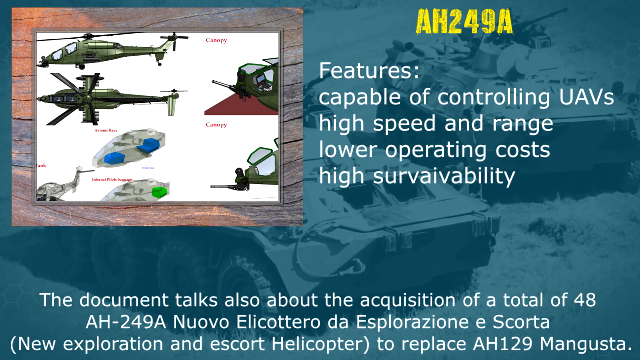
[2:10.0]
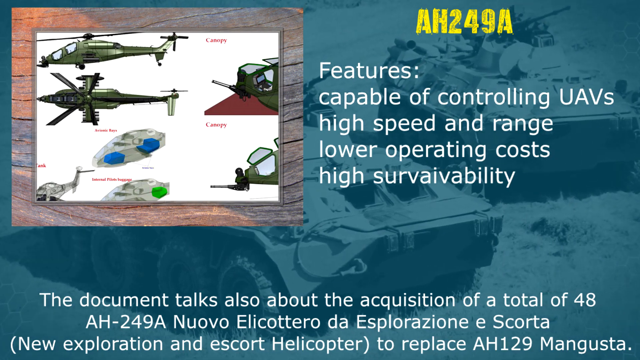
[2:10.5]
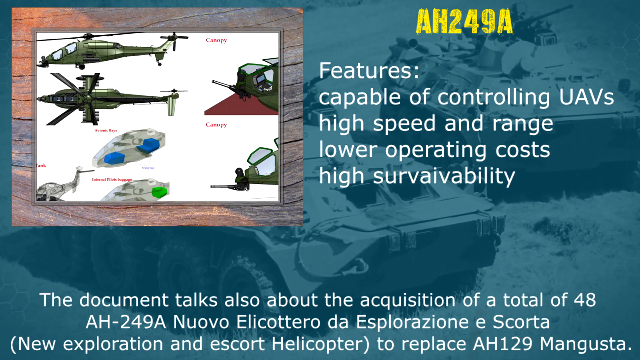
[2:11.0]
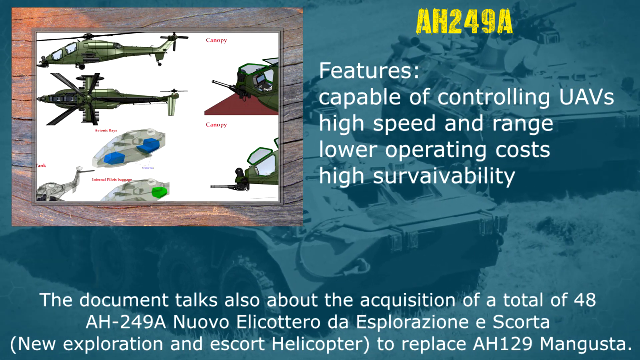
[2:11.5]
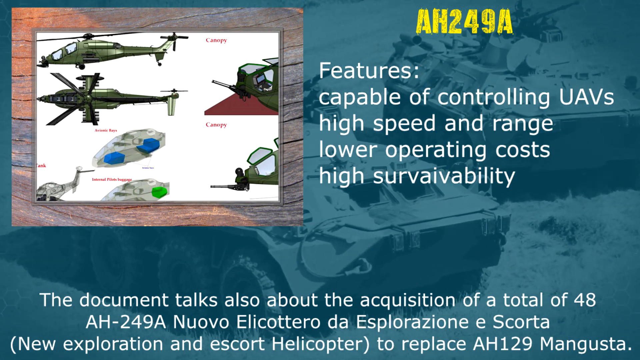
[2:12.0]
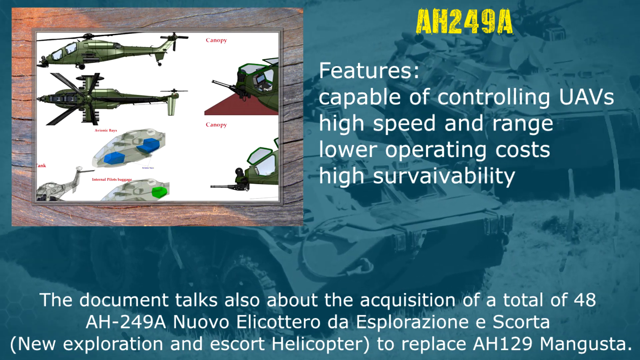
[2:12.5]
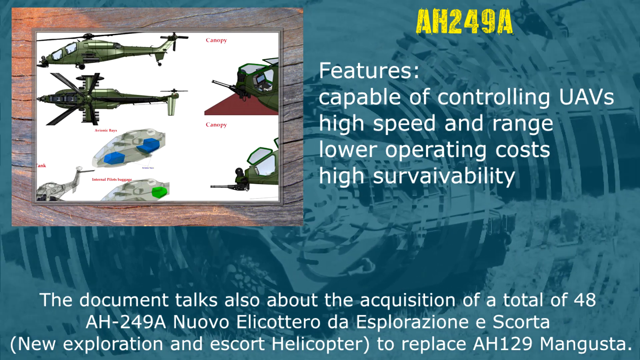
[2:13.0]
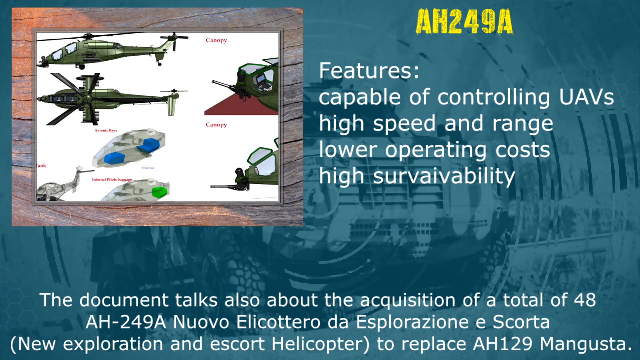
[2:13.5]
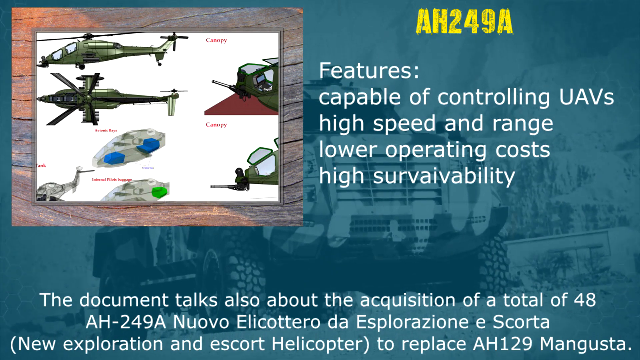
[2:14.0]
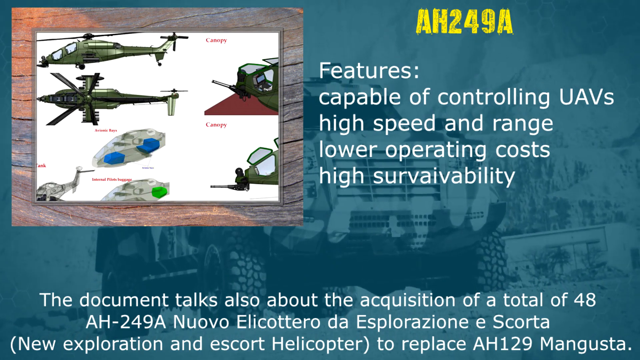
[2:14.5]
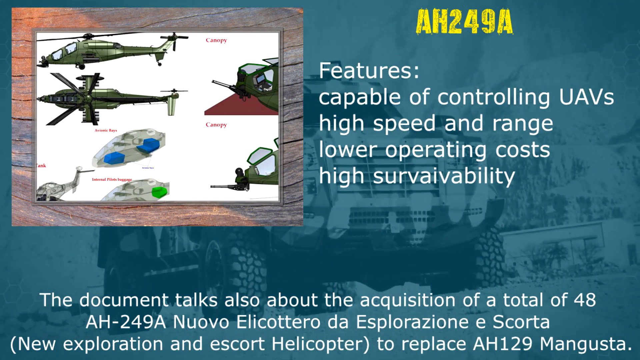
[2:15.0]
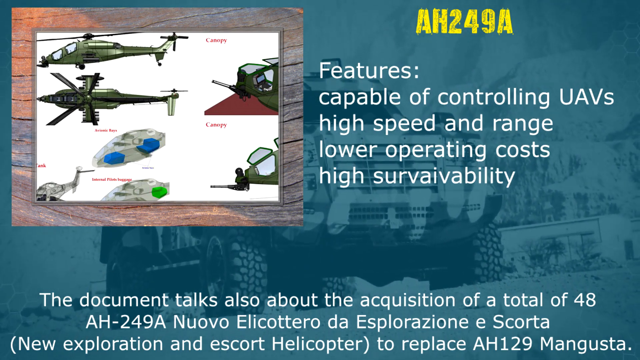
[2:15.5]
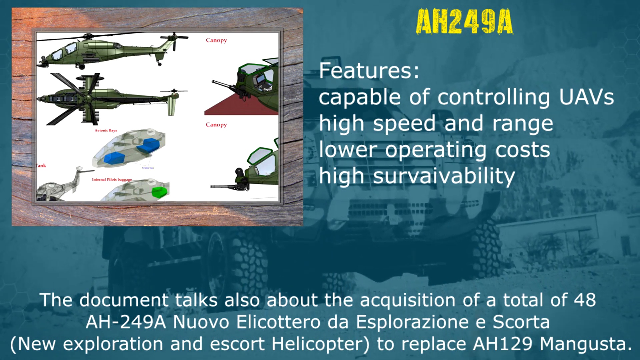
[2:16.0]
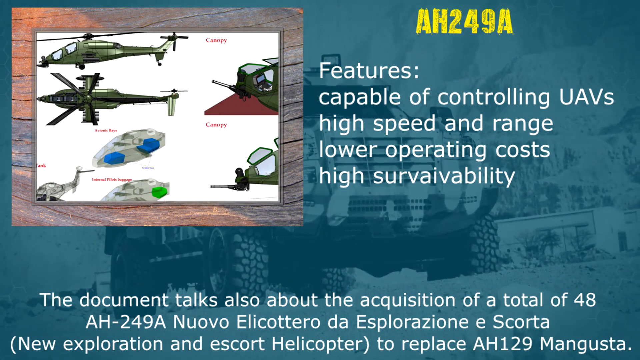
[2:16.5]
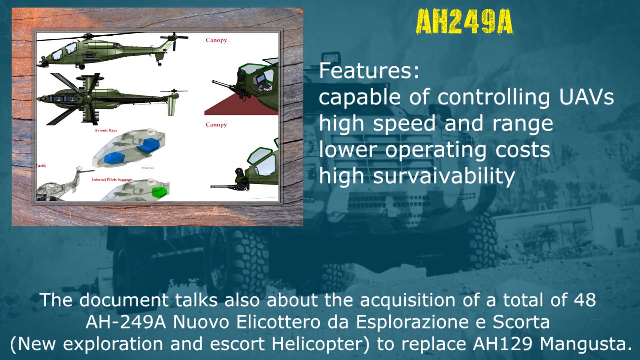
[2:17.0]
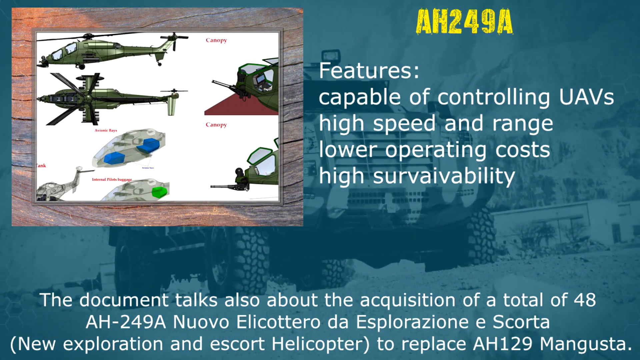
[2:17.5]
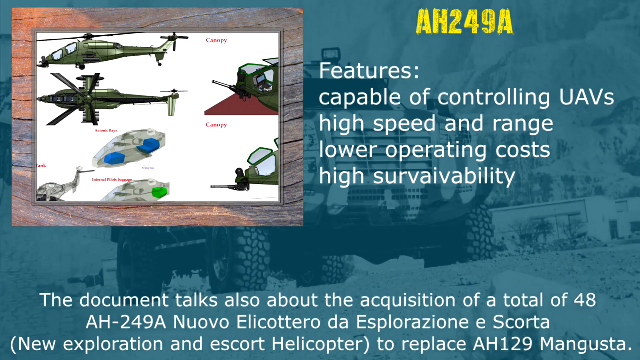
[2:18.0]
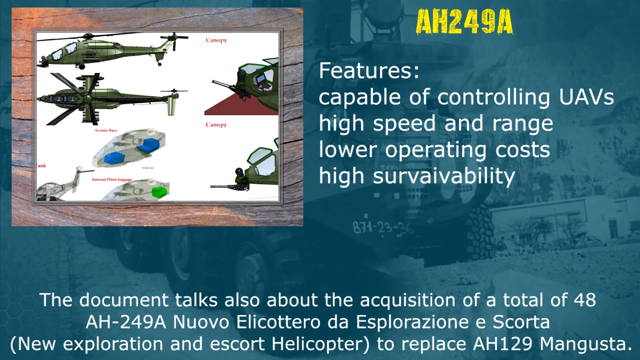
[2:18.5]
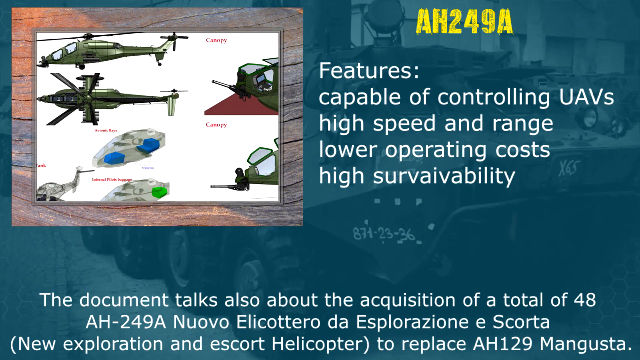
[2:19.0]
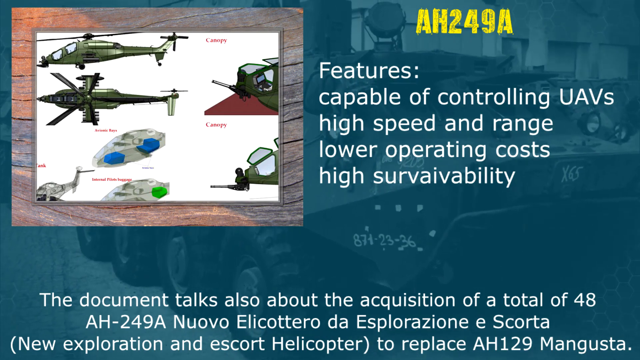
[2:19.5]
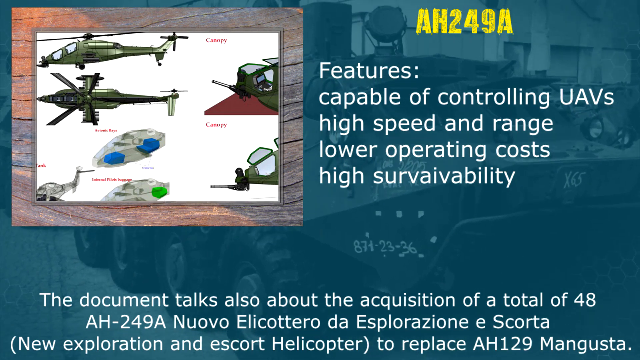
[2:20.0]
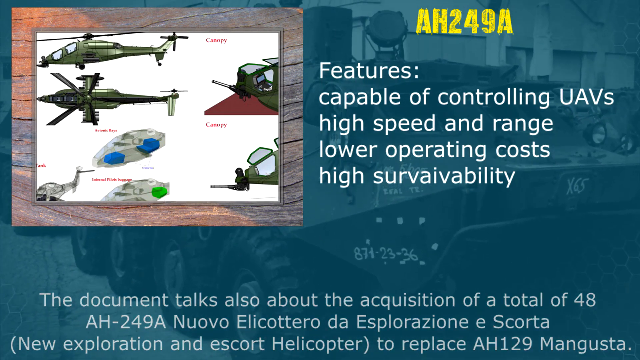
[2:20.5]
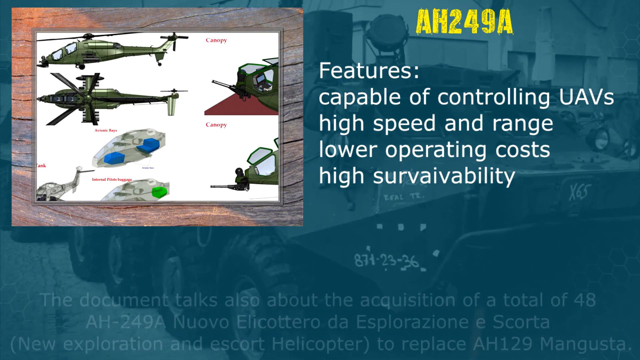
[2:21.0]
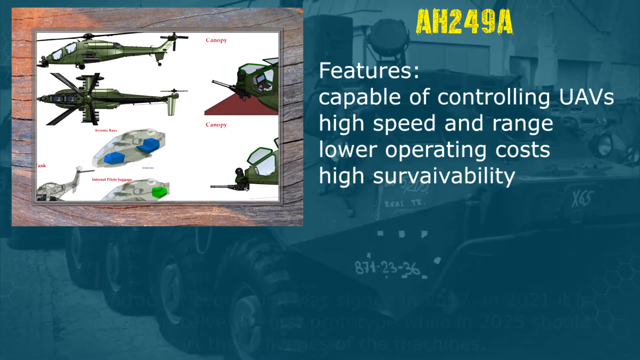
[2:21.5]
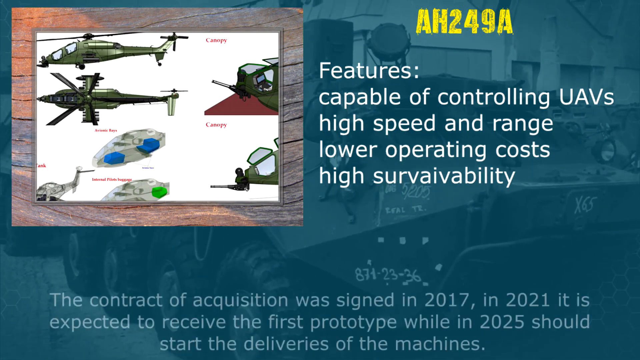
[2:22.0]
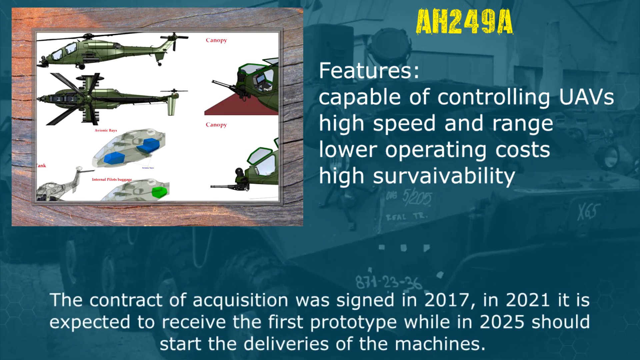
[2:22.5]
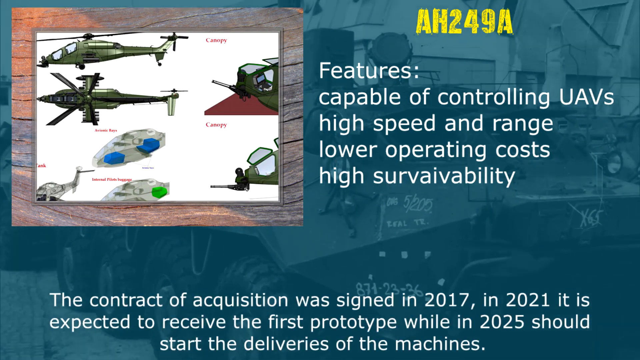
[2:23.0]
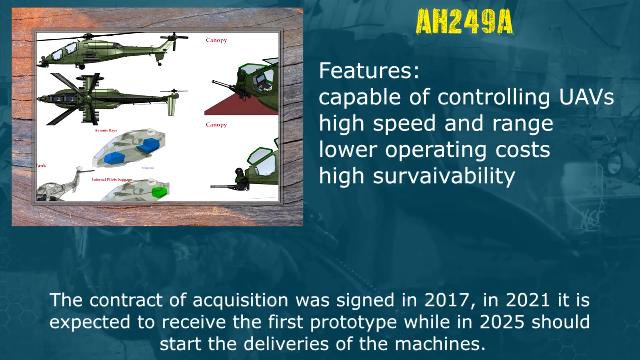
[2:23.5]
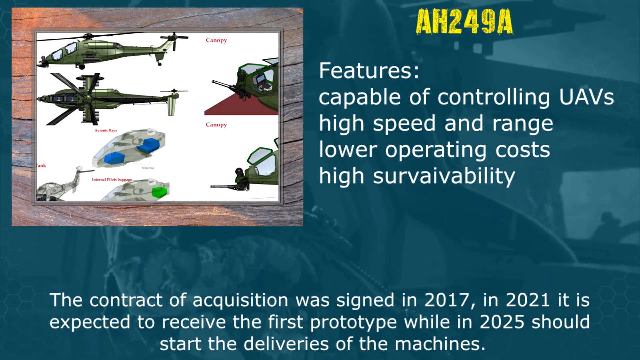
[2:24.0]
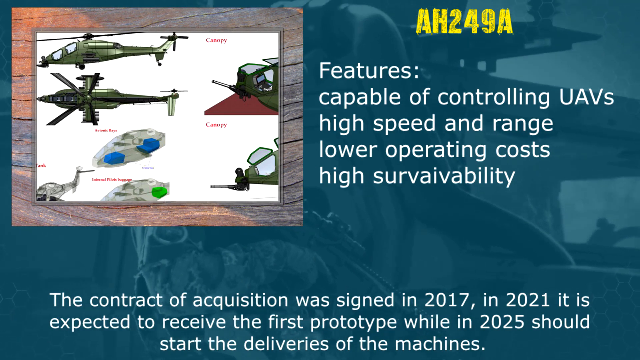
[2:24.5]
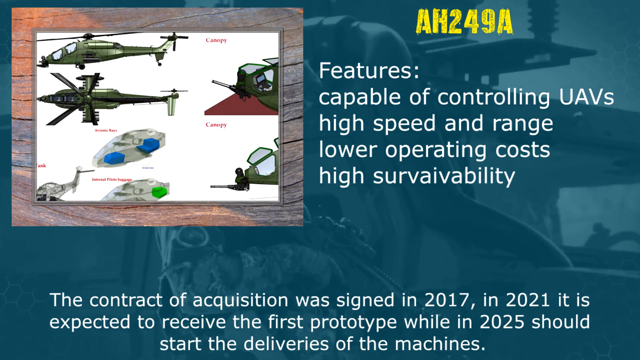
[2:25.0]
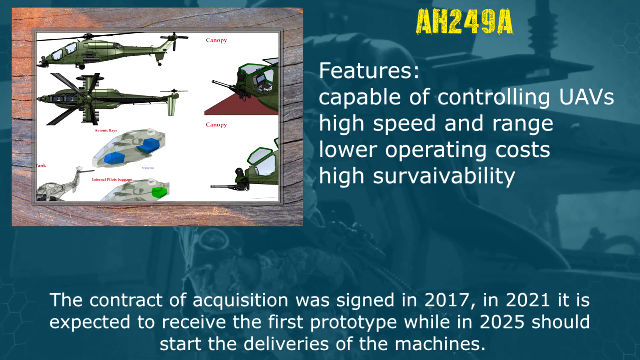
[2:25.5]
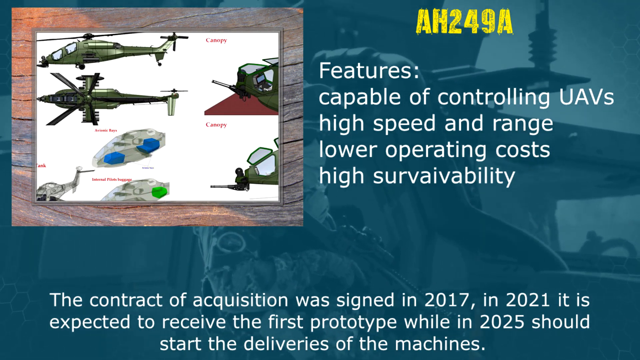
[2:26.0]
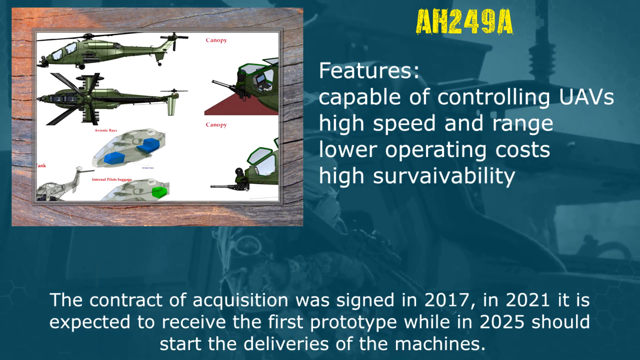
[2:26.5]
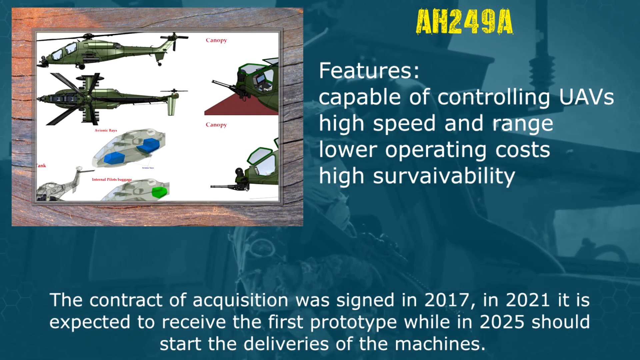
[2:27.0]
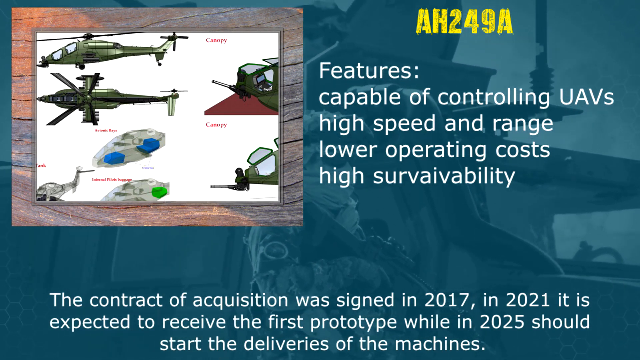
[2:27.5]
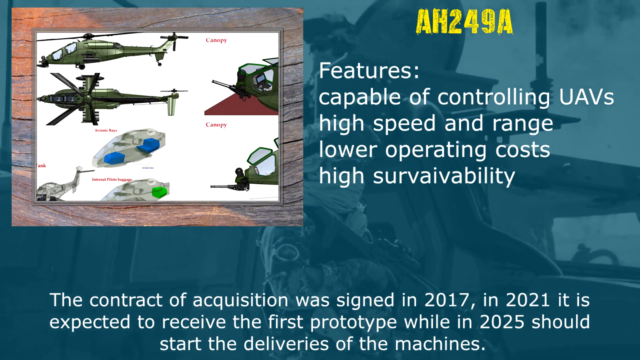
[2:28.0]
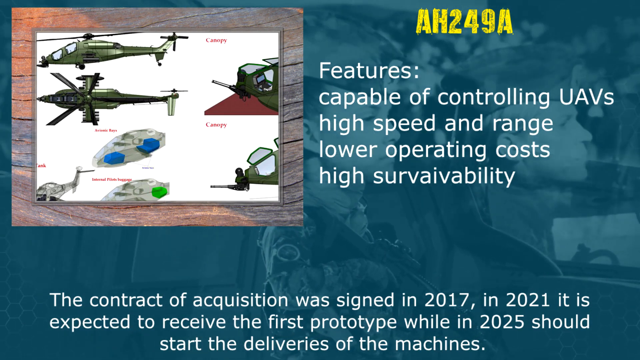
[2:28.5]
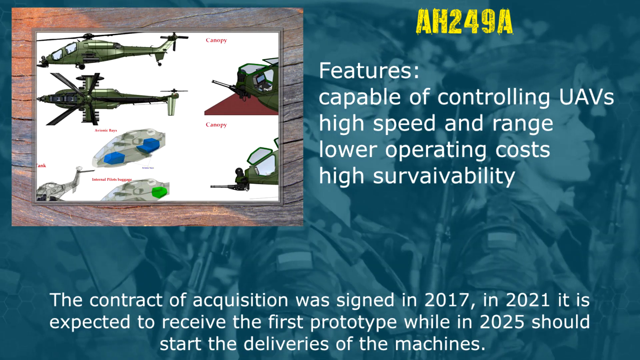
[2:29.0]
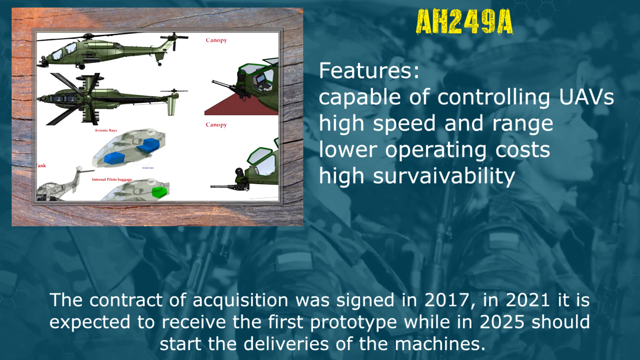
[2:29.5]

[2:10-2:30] A blue background shows different types of army equipment. A box in the upper left corner holds different types of what appear to be airplanes and army equipment. On the right side, yellow writing says "AH-249A", and below it reads "Features. Capable of controlling UAVs, high speed and range, lower operating cost, high survivability." White writing at the bottom of the screen gives additional information. The background images slowly change through different types of tanks and airplanes, and one picture looks to include some army soldiers. The images slowly fade into one another as they change and remain a dark blue color. The white writing at the bottom of the screen changes as well.